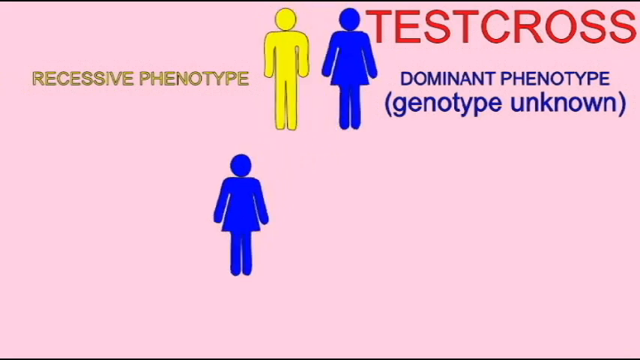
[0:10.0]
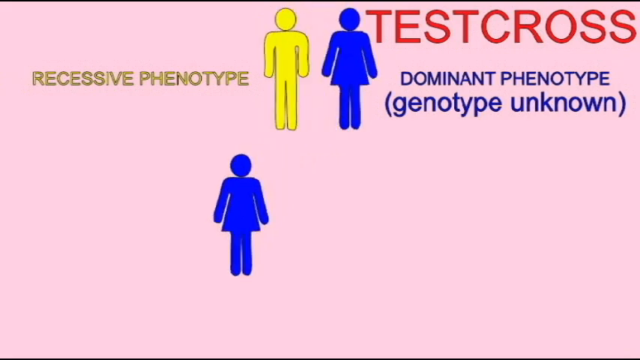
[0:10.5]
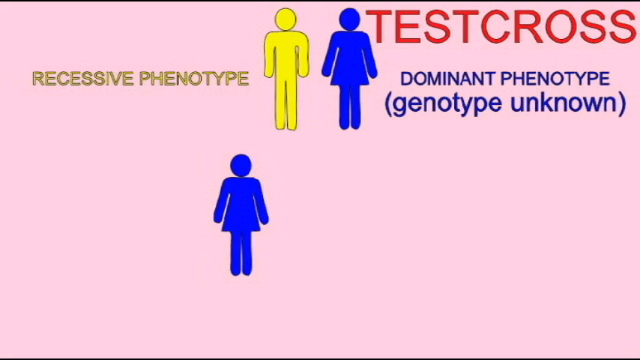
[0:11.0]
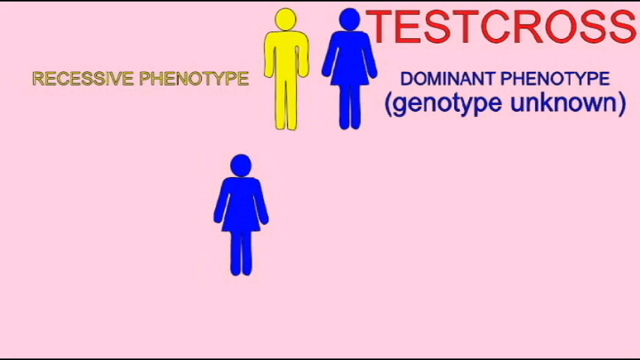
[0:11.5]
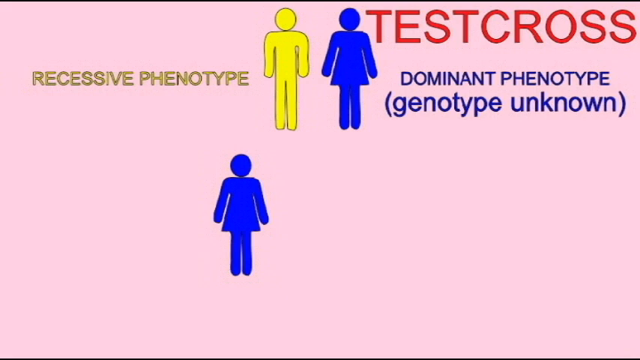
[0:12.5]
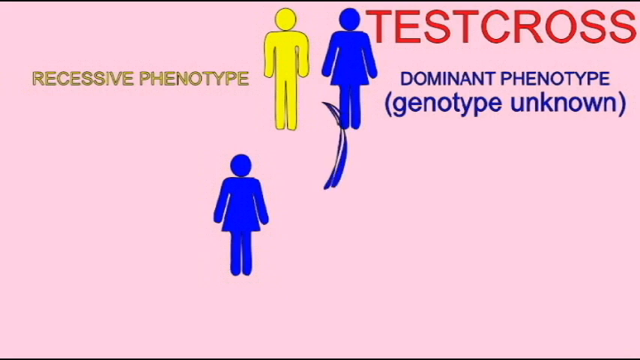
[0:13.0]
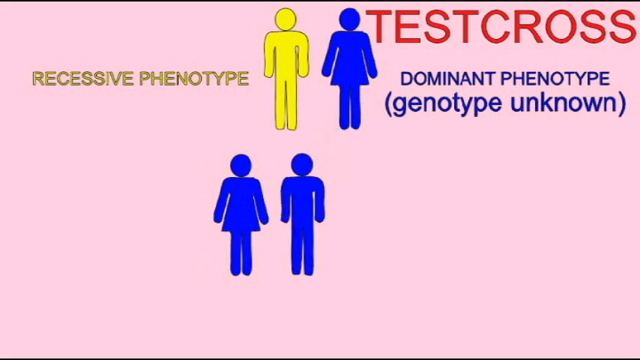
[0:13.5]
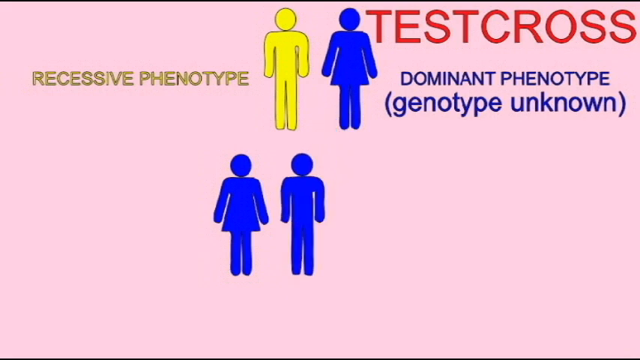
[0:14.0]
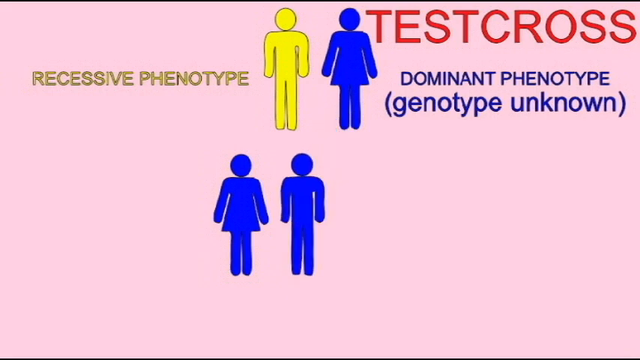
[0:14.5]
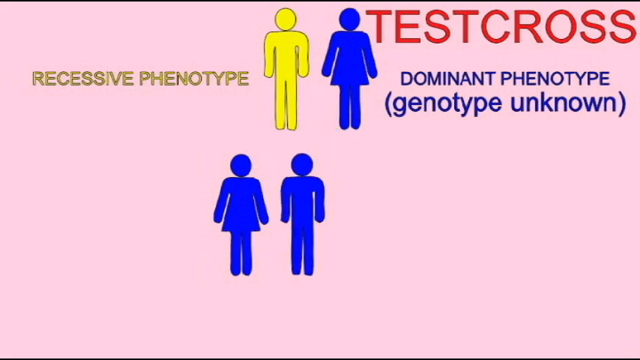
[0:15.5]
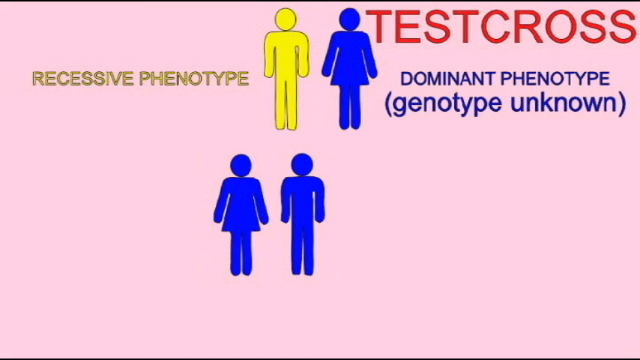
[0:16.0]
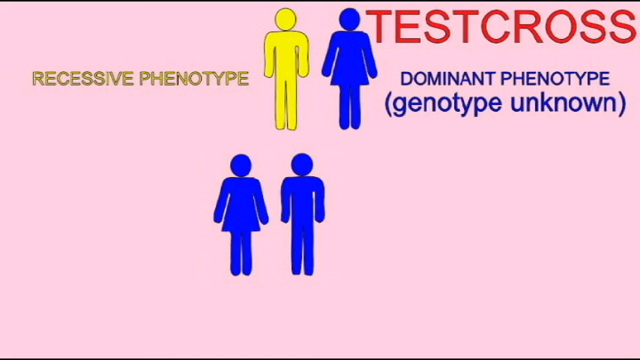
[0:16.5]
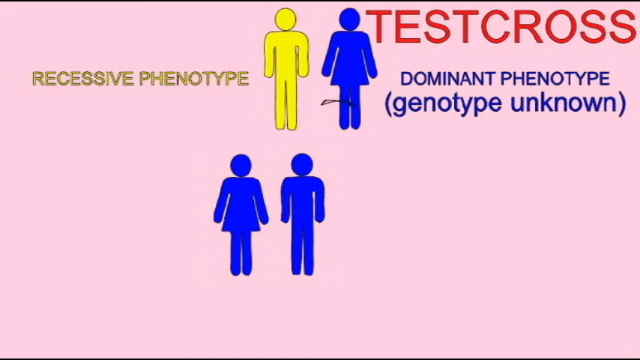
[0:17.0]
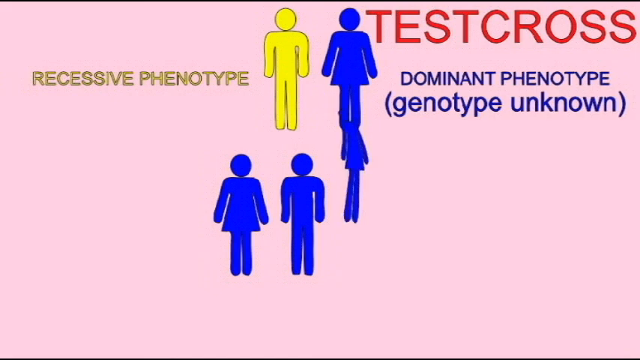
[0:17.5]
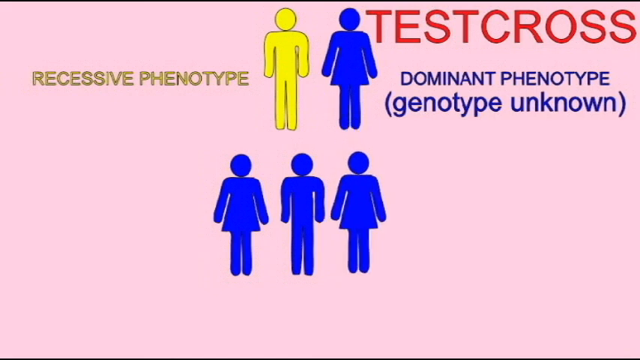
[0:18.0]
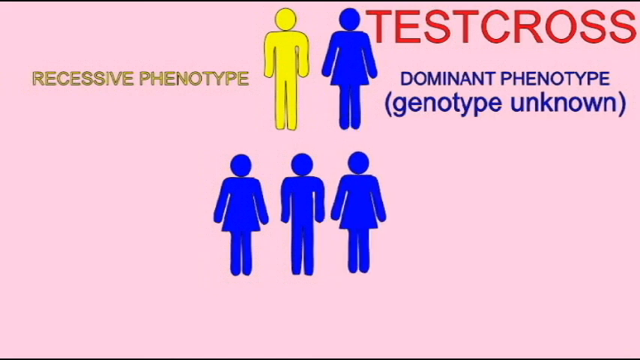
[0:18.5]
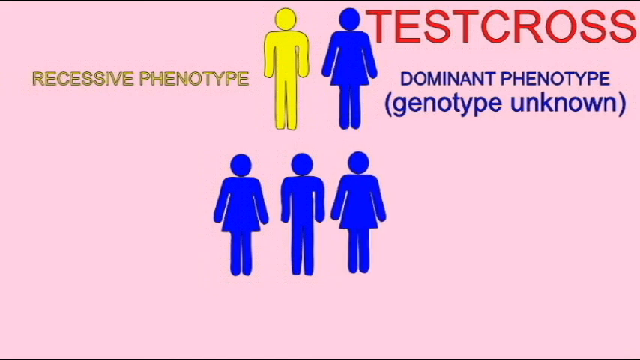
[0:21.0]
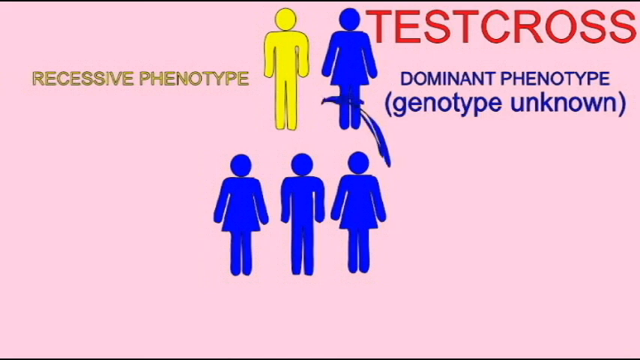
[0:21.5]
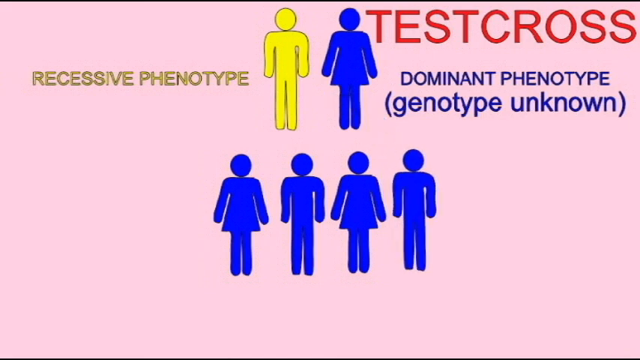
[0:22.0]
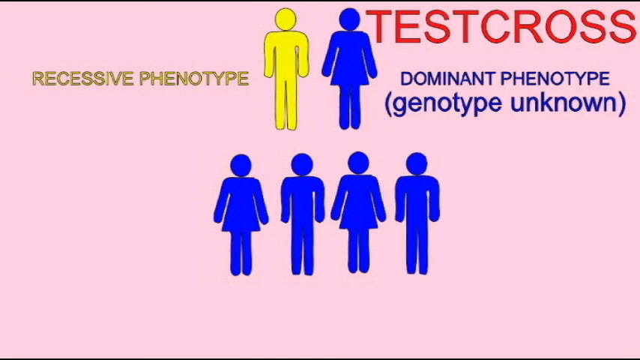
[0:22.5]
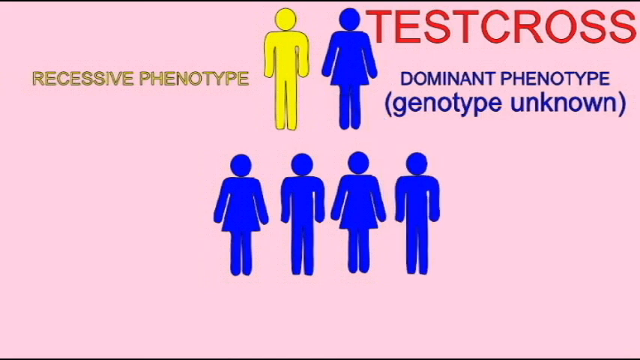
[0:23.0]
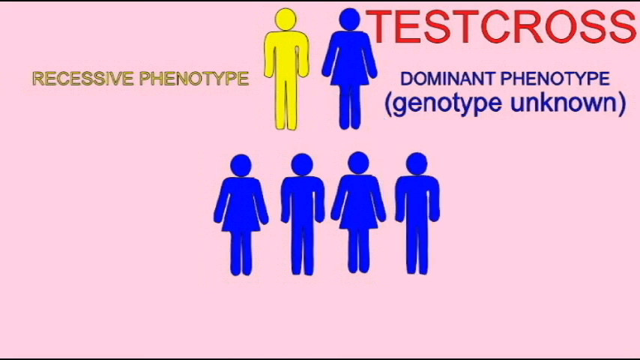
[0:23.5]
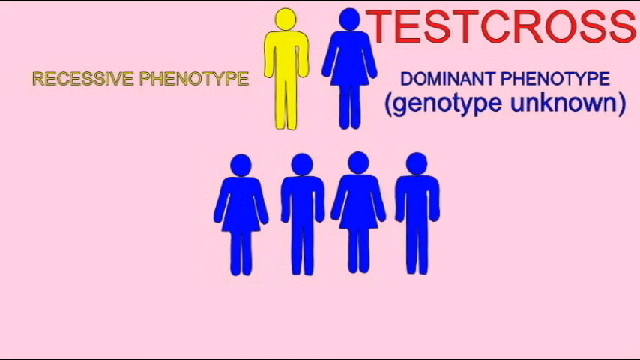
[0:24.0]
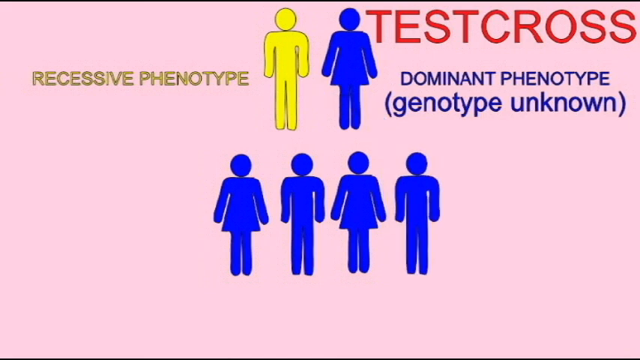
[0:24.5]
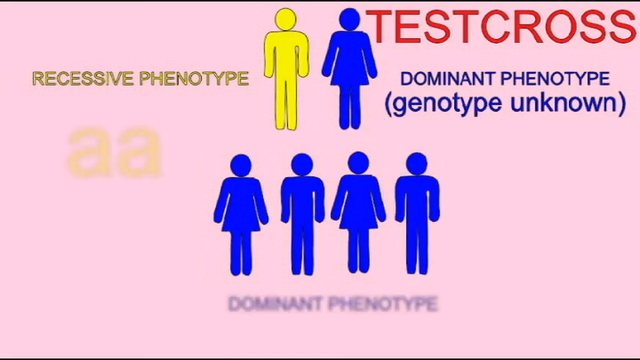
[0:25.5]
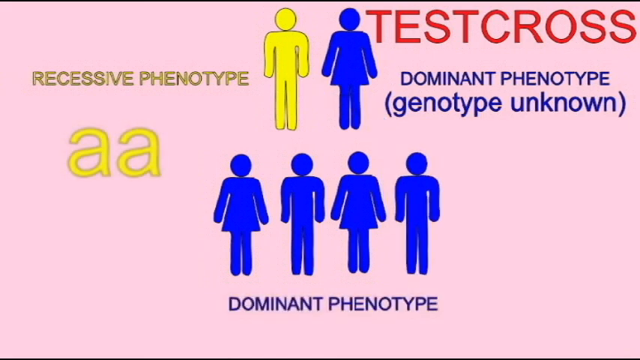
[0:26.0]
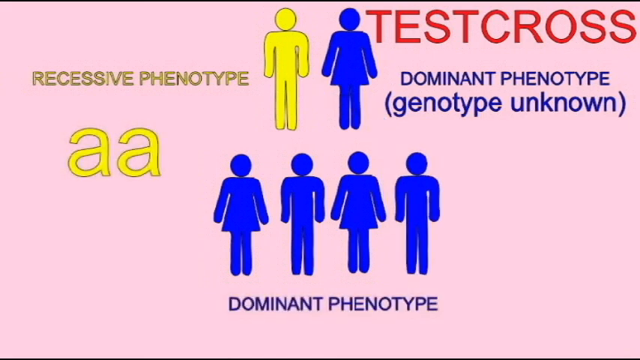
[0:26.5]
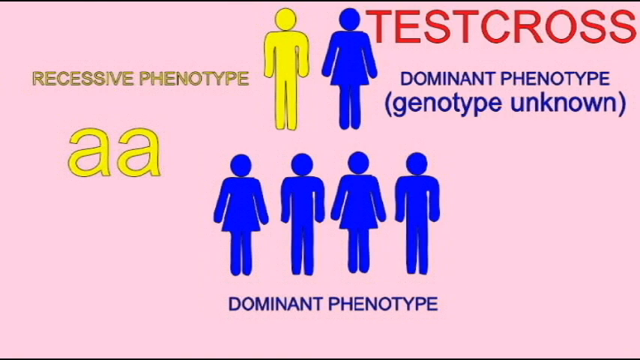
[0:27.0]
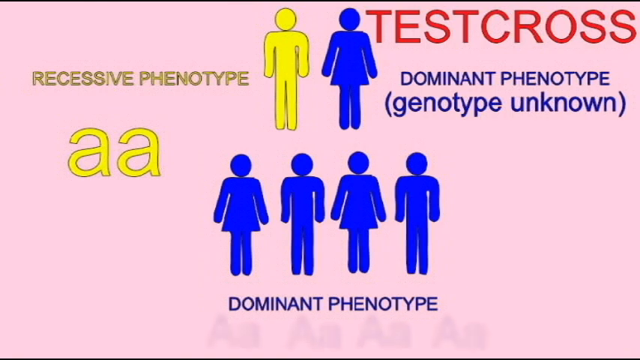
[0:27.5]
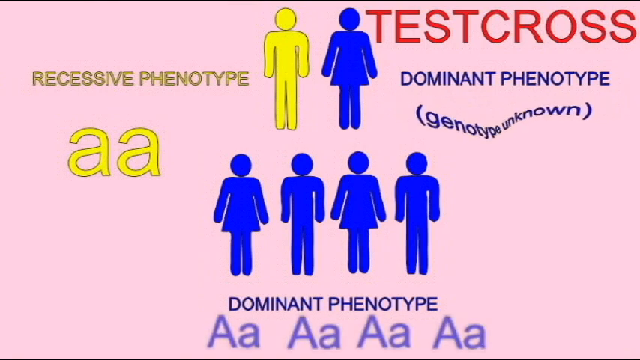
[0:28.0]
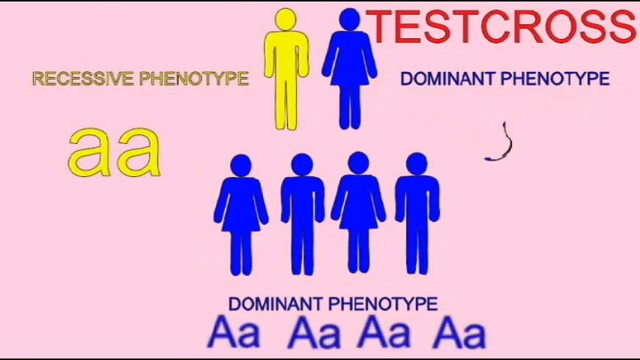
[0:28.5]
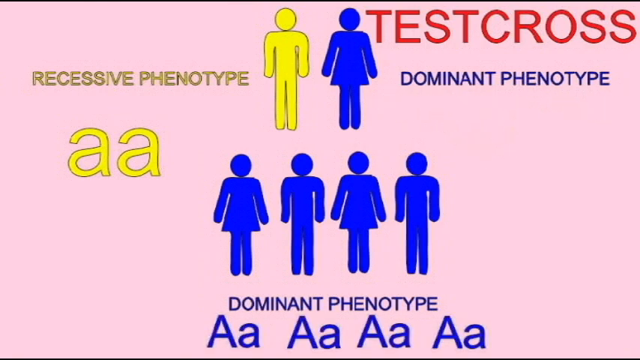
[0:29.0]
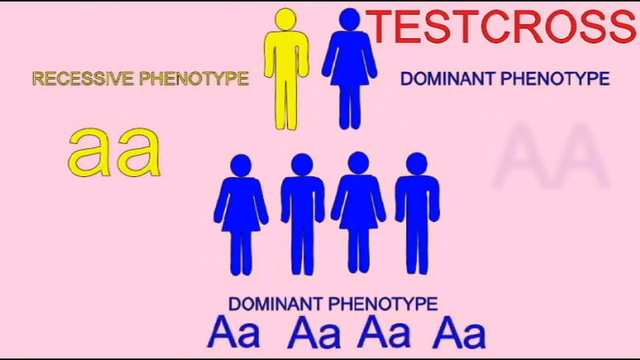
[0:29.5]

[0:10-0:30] Against a pink background, a yellow figure is at the top and an image of a female in blue is on the right. "Test cross" is written in the right-side corner, "recessive phenotype" on the left side, "dominant phenotype" on the right side, and "genotype unknown" at the bottom. An image of a female in blue and a figure of a male, also in blue, then appear. Another image of a female appears at the bottom, followed by another image of a male. At the bottom, "dominant phenotype" is written in blue; on the left side "aa" is written in yellow, and on the right side "AA" is written in blue.